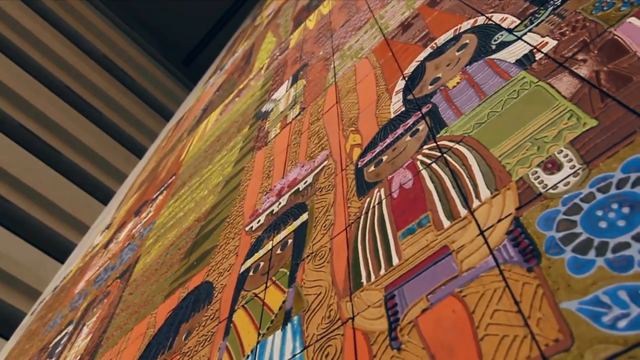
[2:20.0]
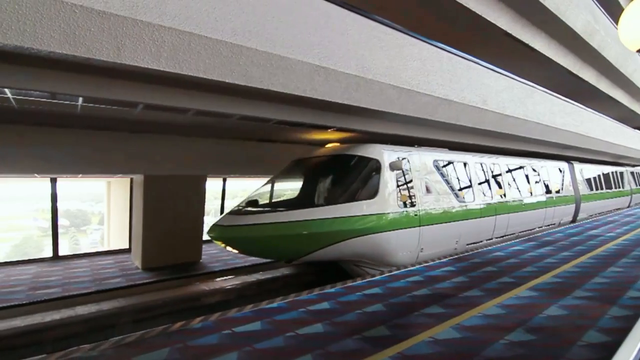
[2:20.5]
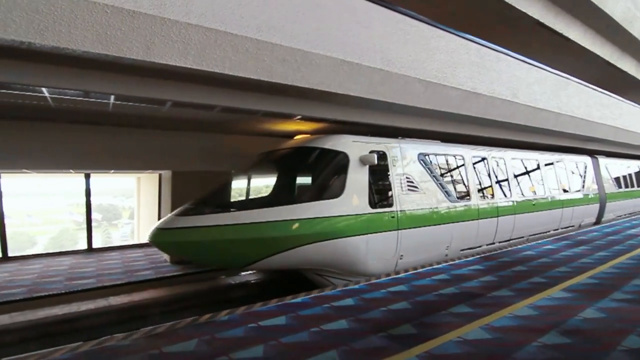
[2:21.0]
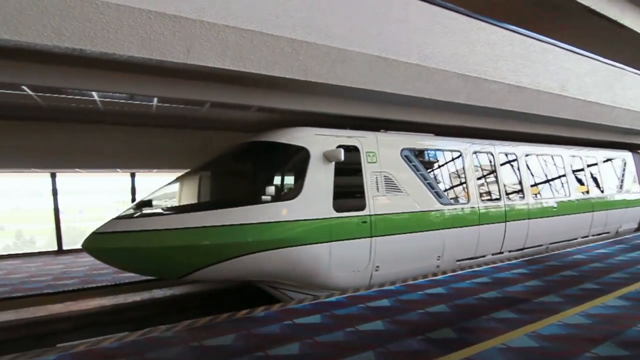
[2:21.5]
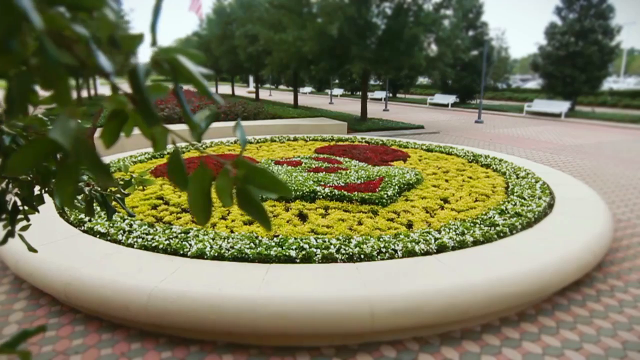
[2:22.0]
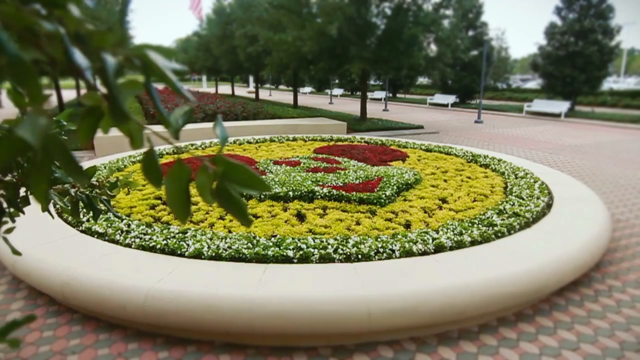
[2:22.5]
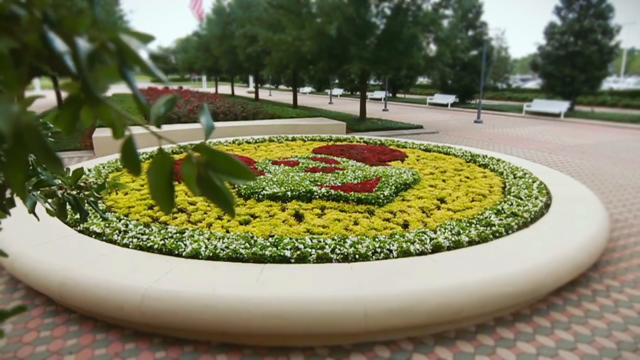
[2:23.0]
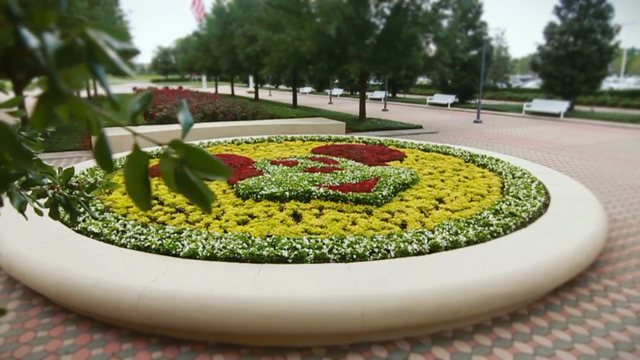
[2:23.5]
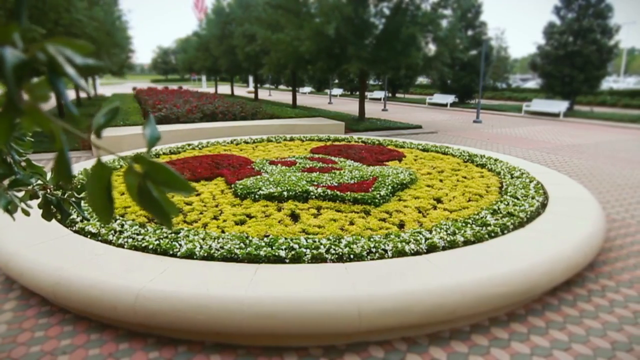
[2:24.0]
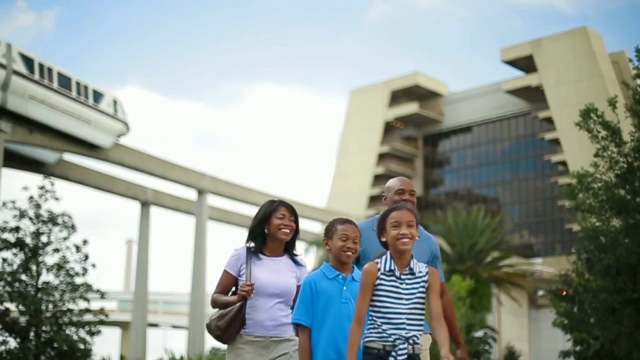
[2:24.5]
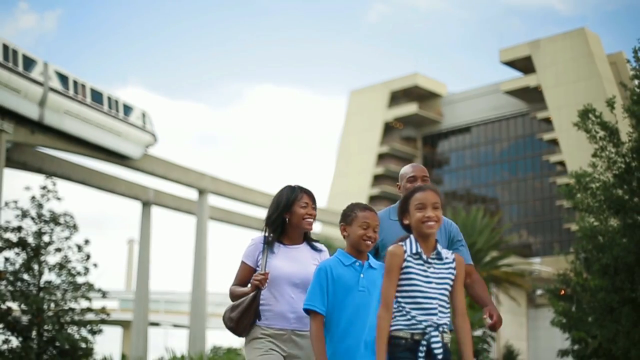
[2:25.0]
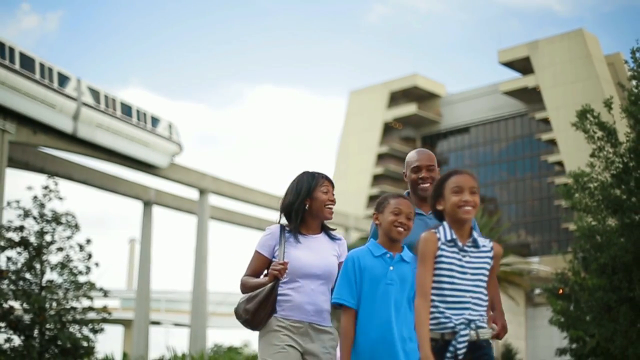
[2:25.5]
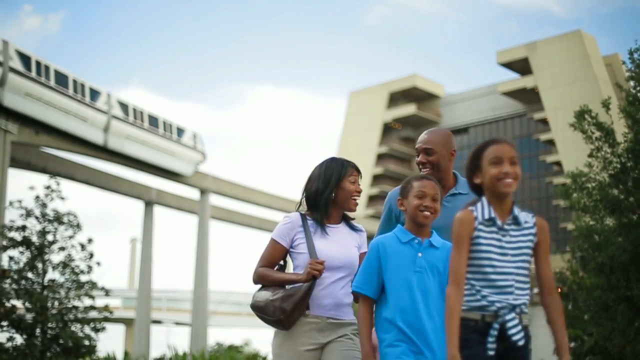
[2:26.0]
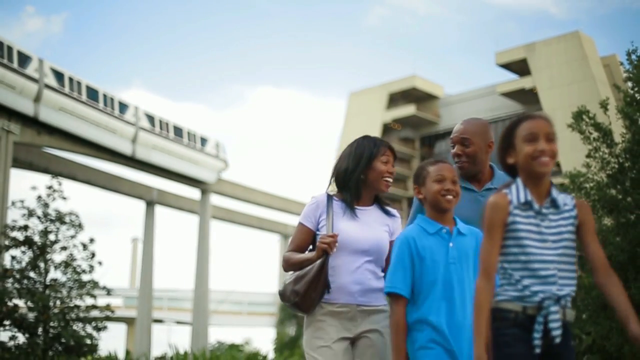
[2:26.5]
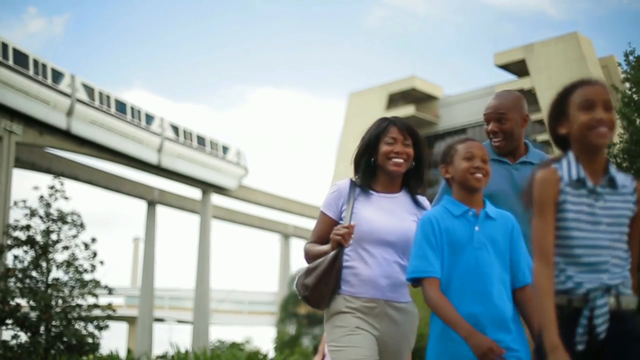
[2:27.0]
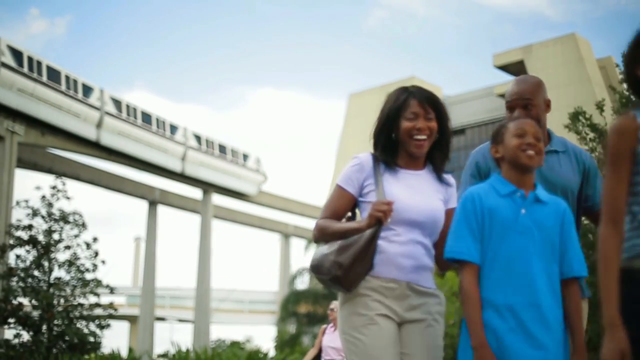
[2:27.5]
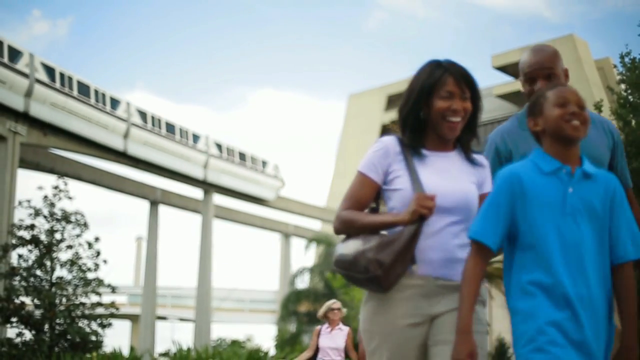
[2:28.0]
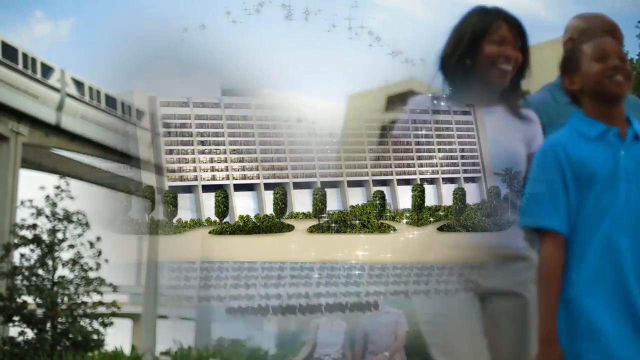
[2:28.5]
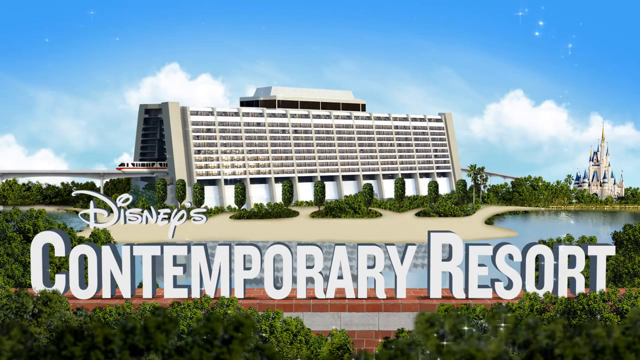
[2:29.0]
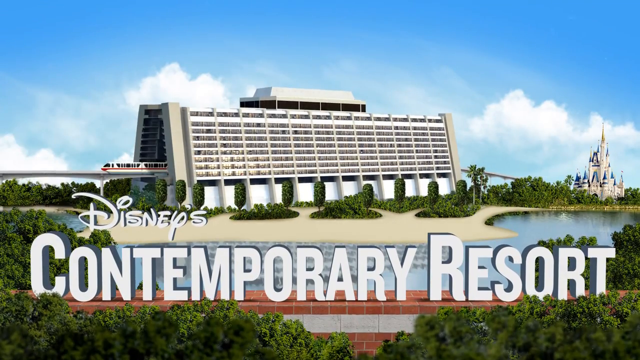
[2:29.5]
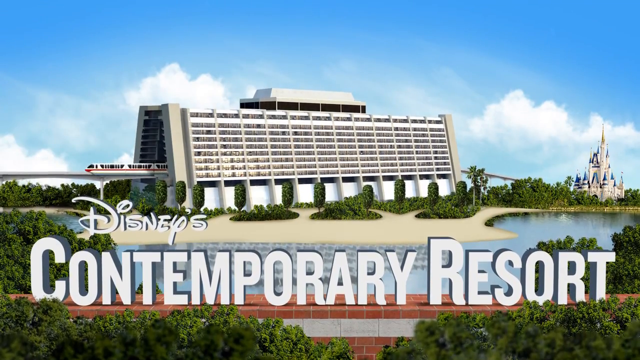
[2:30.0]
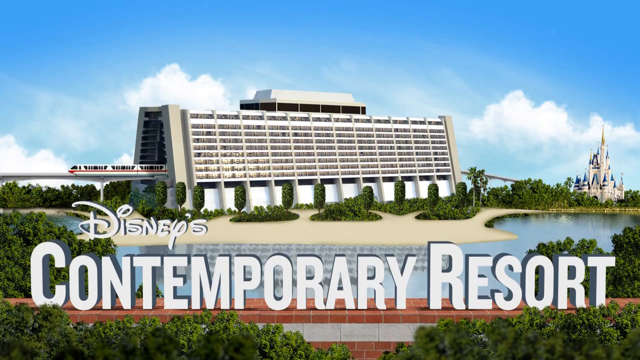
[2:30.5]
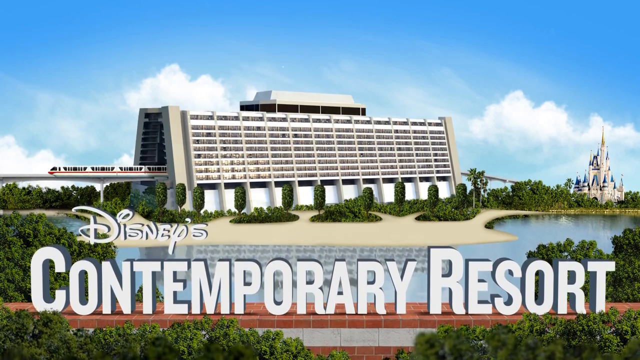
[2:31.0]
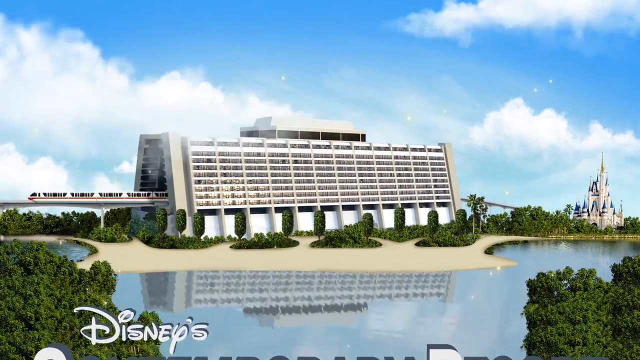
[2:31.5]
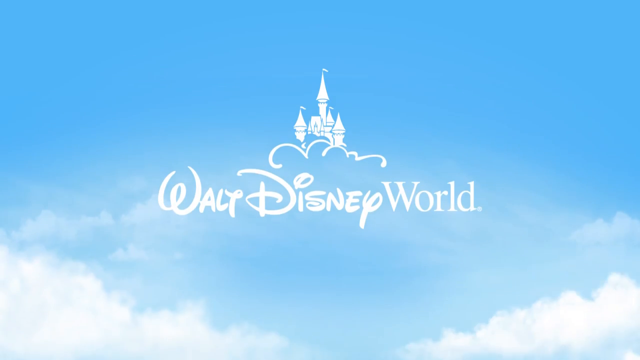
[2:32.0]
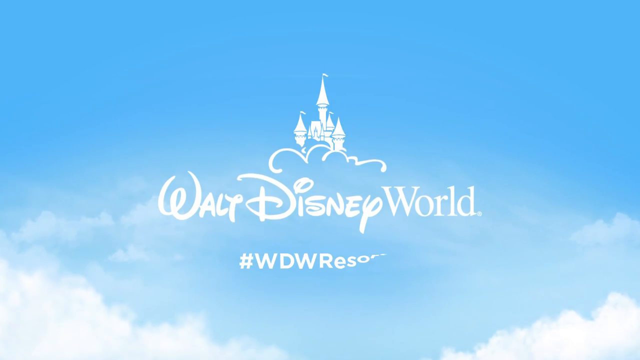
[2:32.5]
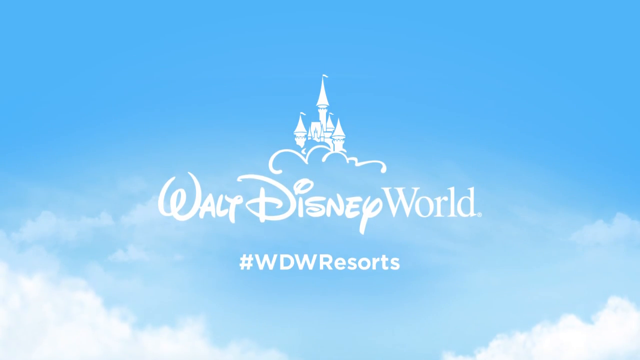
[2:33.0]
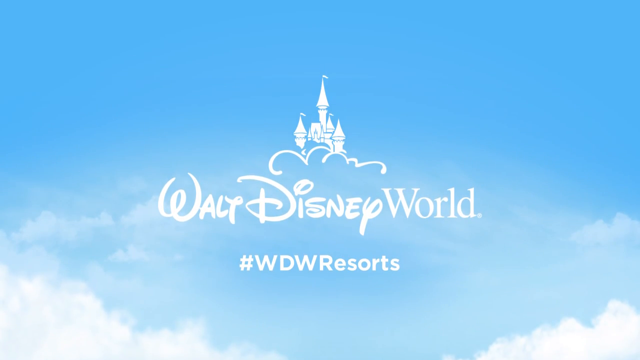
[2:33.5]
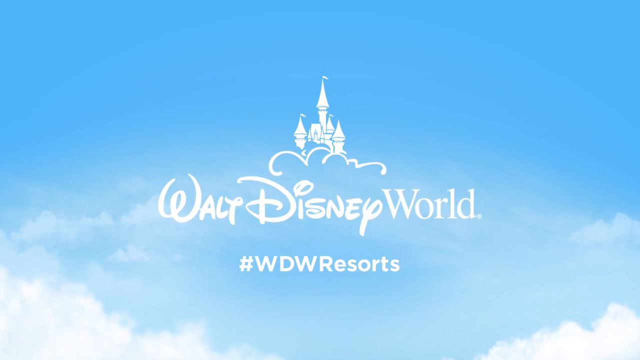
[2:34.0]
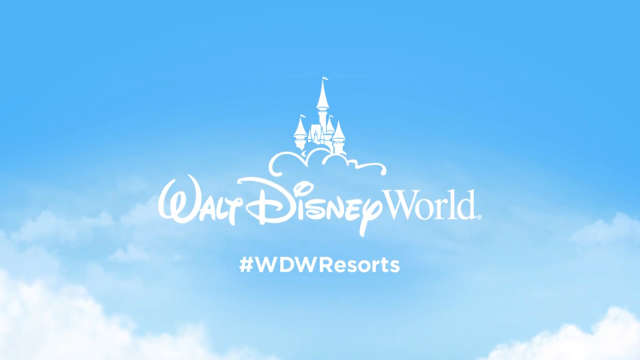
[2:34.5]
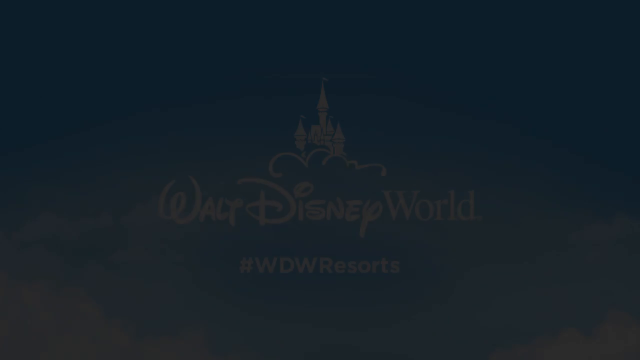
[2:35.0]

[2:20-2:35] Under the title "Disney's Contemporary Resort, Walt Disney World," a quick shot of the tiled mural is followed by the monorail going through the hotel lobby; the monorail is white with a long green stripe running from end to end. At the front of the resort is a large circular planter with different colored flowers and foliage designed to form Mickey's face. A young family, two young children and their parents, walks underneath the monorail toward the park, smiling and looking excited. The same picture from the very beginning appears, showing the resort with the monorail going into it and the castle in the background, taken from the front where the water's edge is visible. The Disney logo is along the bottom, with "Contemporary Resort" in white caps. The video ends with a blue sky with white fluffy clouds and the white castle logo with "Walt Disney World" underneath, along with "#WDWResorts."